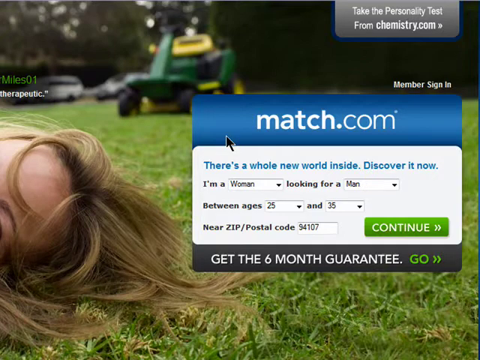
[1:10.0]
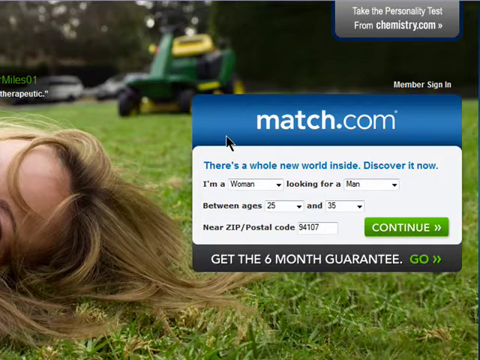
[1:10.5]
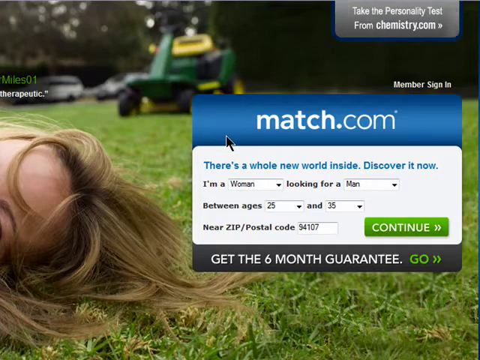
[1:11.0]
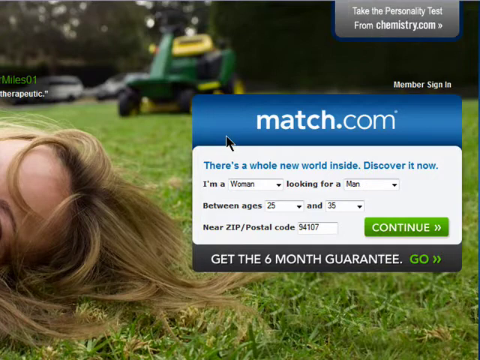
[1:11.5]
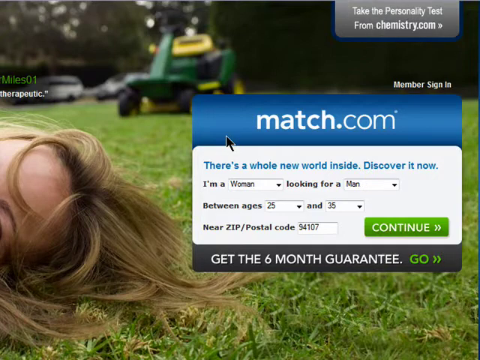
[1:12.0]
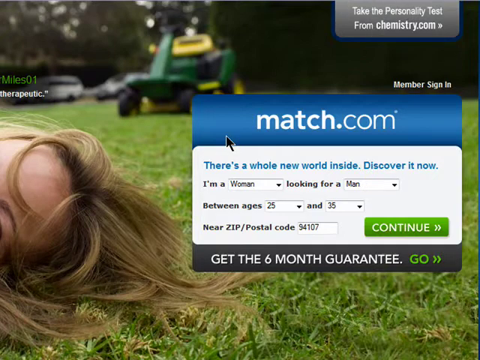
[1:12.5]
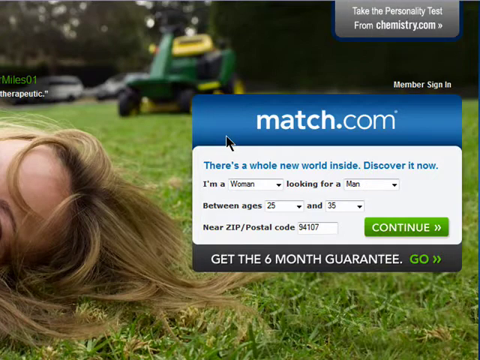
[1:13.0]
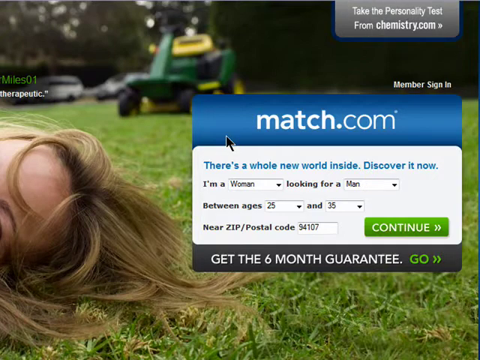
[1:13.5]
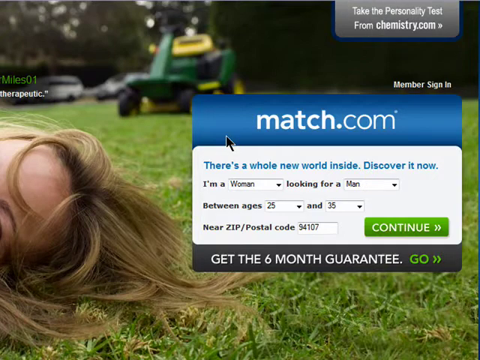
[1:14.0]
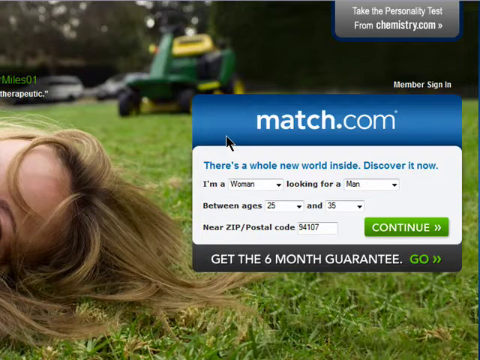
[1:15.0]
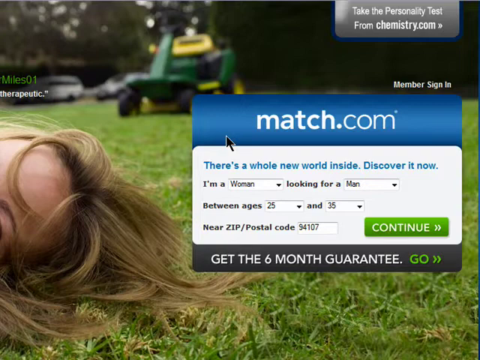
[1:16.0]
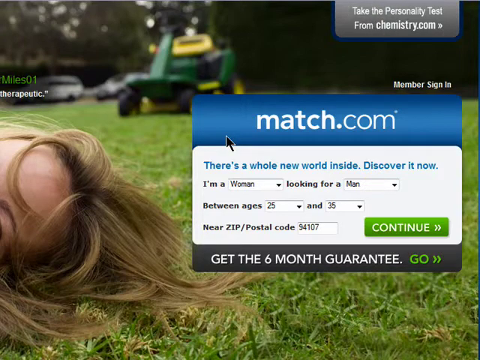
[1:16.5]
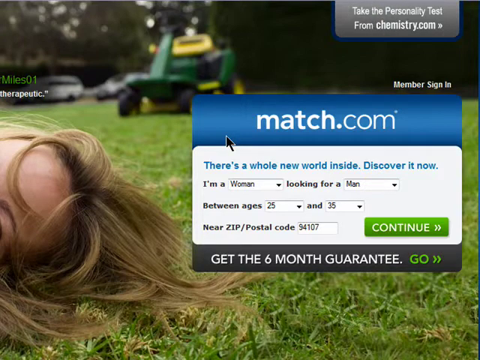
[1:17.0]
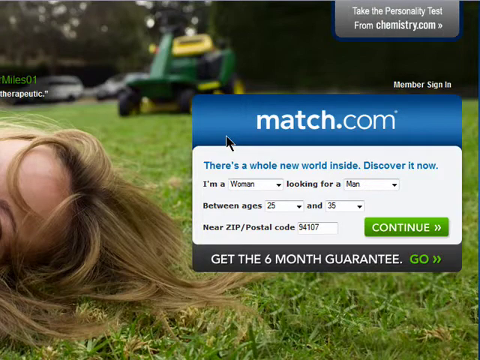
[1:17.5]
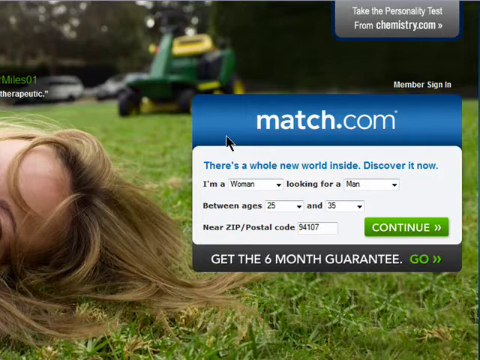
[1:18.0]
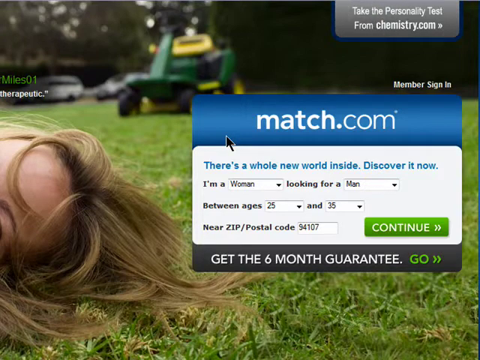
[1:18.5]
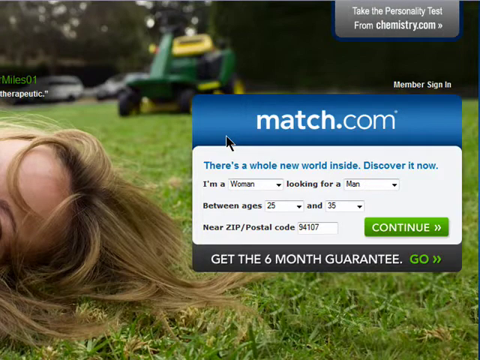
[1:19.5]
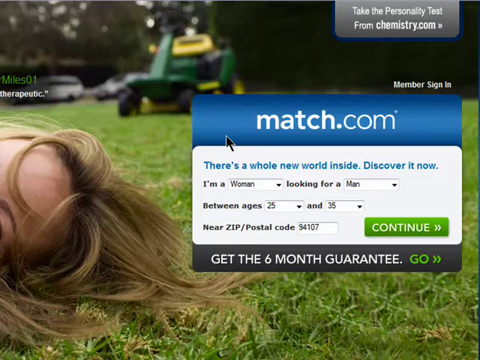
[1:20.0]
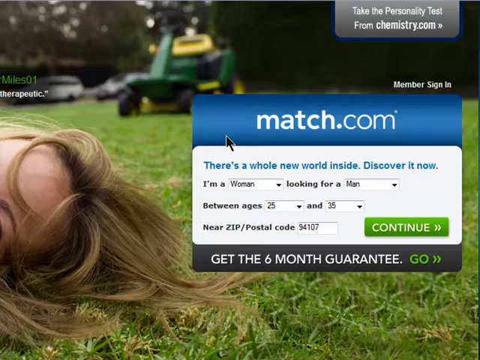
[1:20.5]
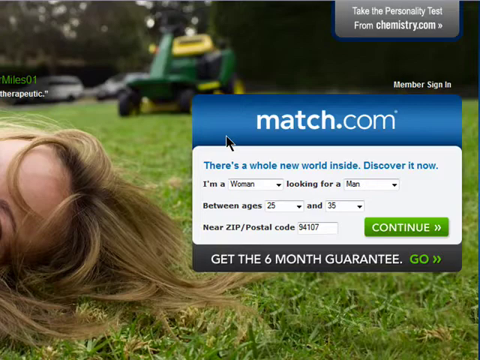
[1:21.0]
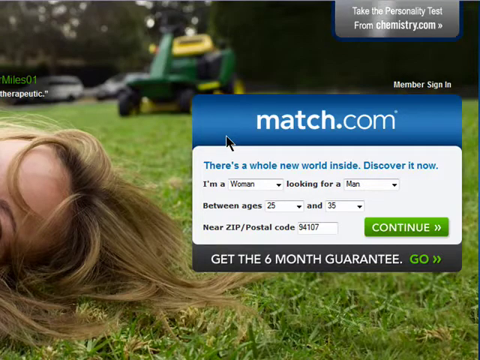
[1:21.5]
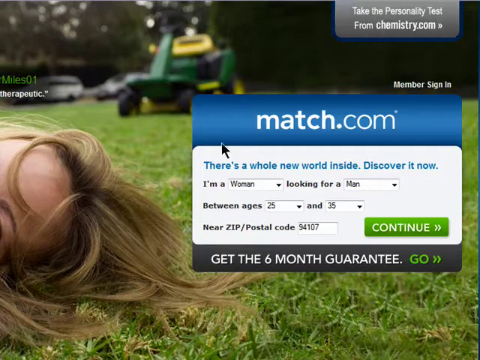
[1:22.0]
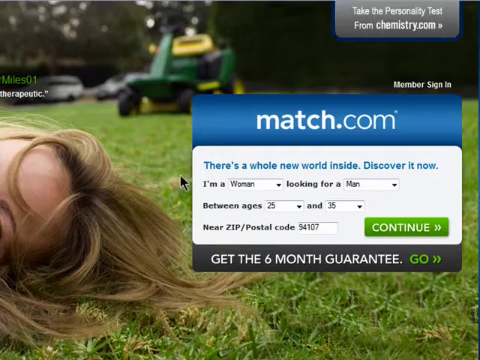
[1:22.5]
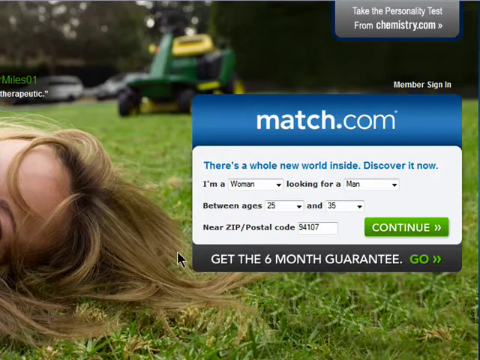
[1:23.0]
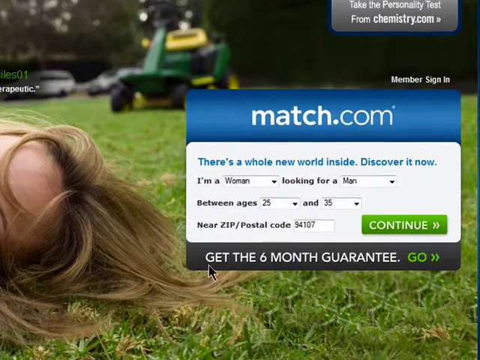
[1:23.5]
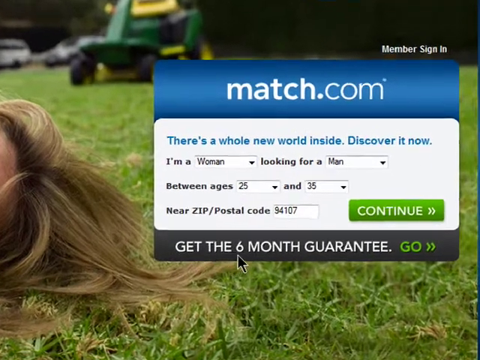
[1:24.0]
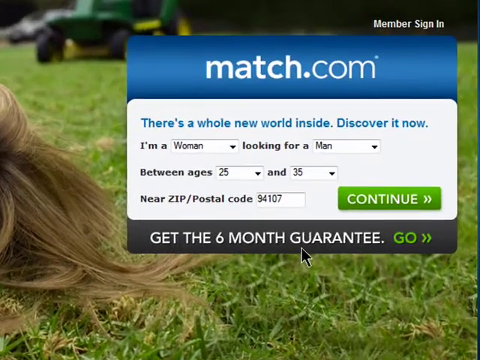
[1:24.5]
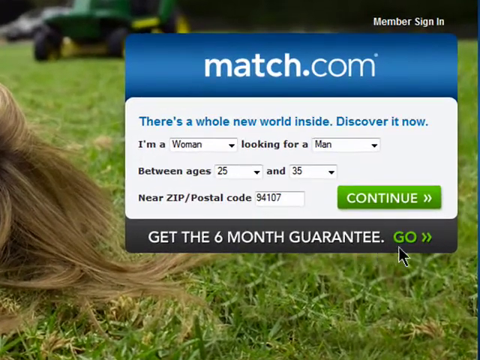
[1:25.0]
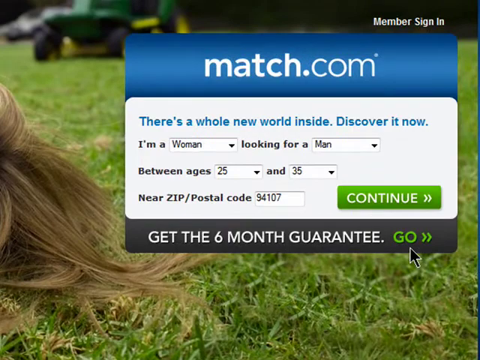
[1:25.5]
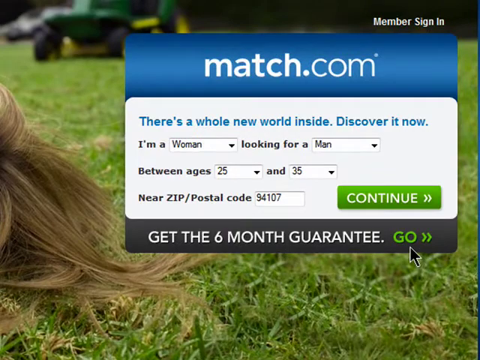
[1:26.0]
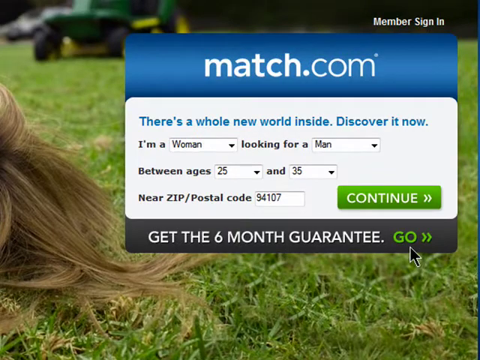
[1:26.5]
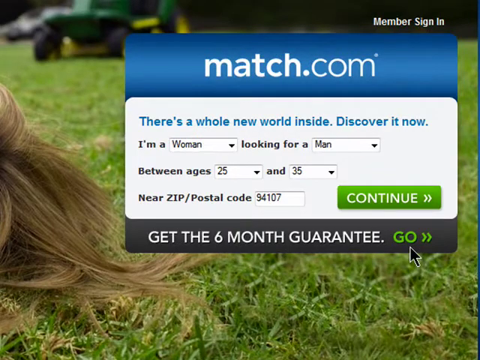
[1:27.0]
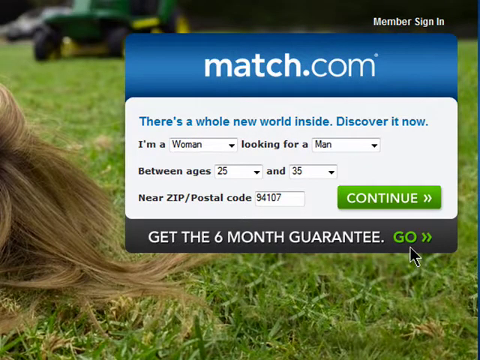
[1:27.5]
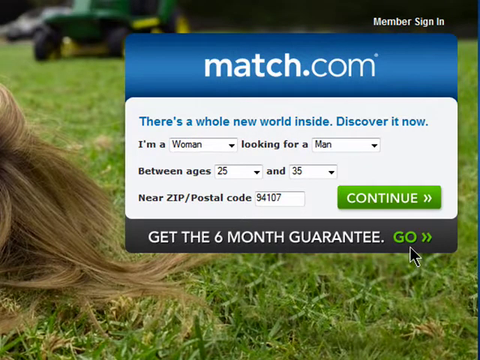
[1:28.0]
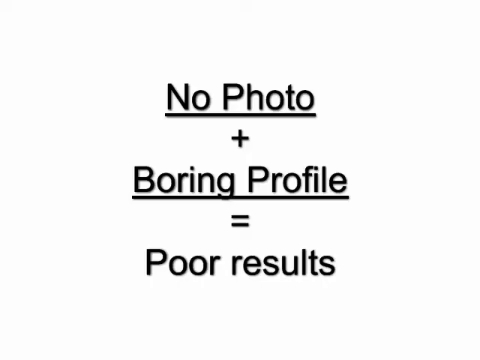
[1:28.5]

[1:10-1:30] The view is focused on a selection box for signing up for Match.com. Part of an image is in the background, with a woman's hair off to the left; she appears to be laying on the grass. At the top right of the screen is a gray button with a link to take a personality test from chemistry.com, which has a glimmer animation. The selection box has a title on a blue background reading "match.com". Beneath it are options in the form of sentences with drop-down boxes: the first line is "I am a woman looking for a man", with drop-downs marked by black triangles for selecting genders; the second is "between ages 25 and 35", with drop-downs for the numbers; the bottom line reads "near zip or postal code" with a text box. To the right of the bottom line is a green "continue" button. Under the selection box, an area with a dark blue background reads "get the six-month guarantee" with a link for "go". A black arrow cursor is initially near the match.com title. Later, the screen zooms in toward the guarantee offer along the bottom while the cursor moves down, runs underneath this line of text and pauses over the "go" link.